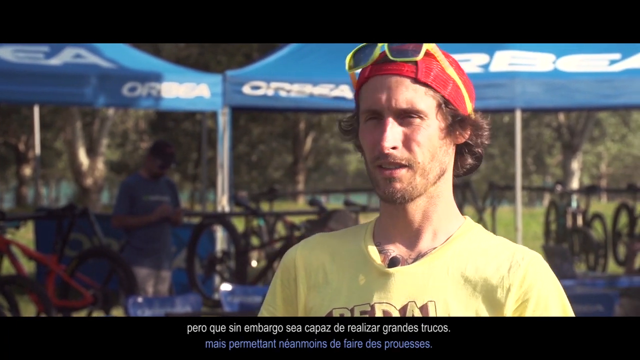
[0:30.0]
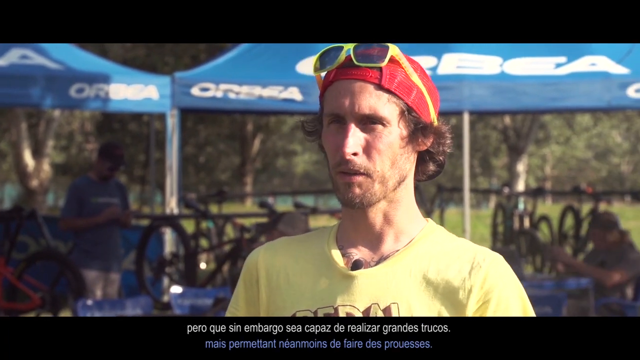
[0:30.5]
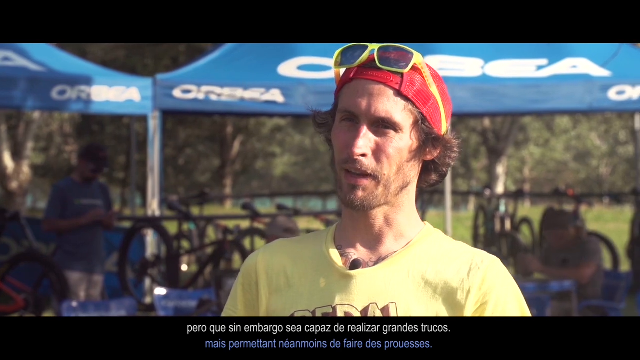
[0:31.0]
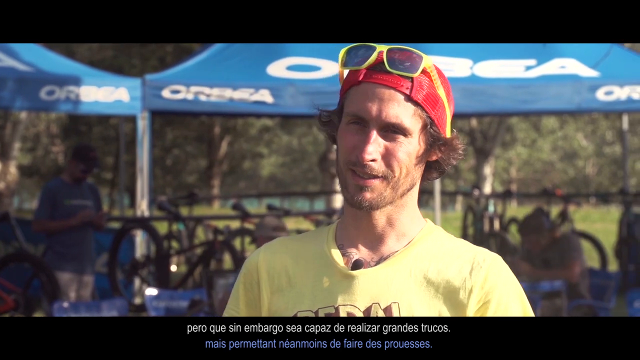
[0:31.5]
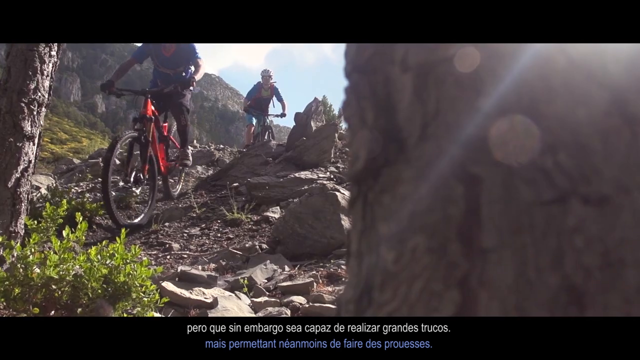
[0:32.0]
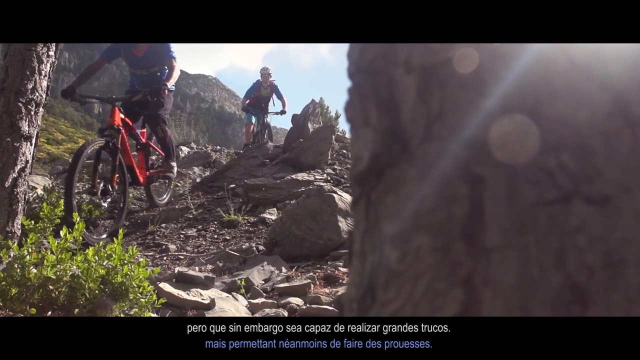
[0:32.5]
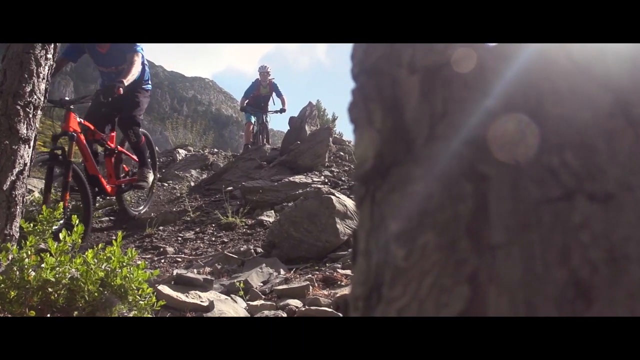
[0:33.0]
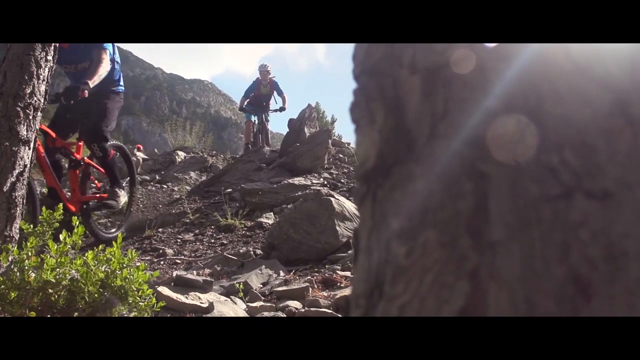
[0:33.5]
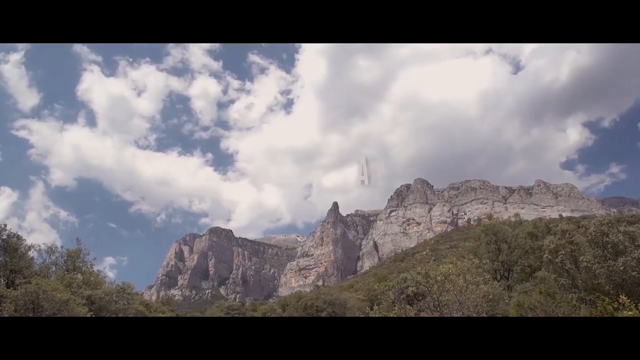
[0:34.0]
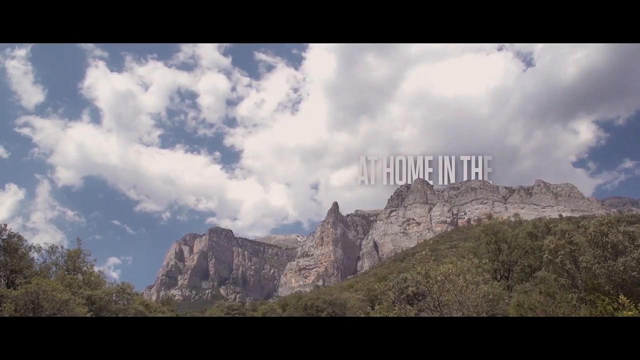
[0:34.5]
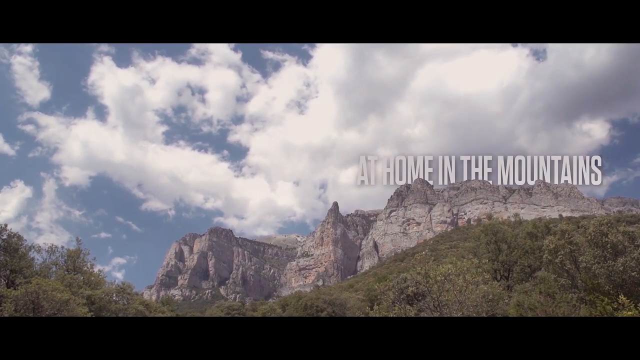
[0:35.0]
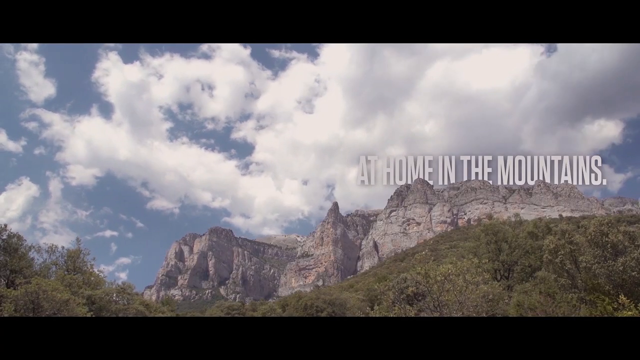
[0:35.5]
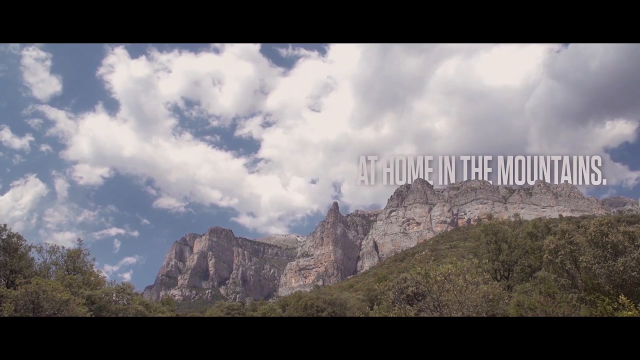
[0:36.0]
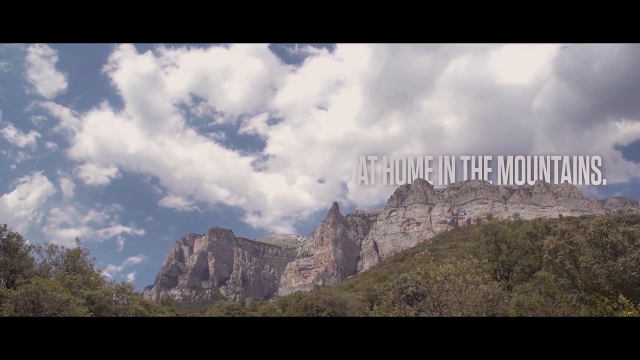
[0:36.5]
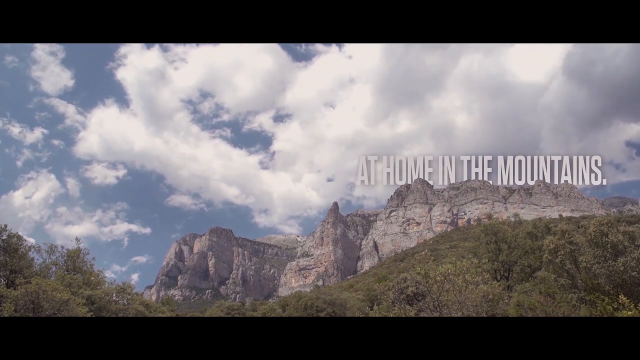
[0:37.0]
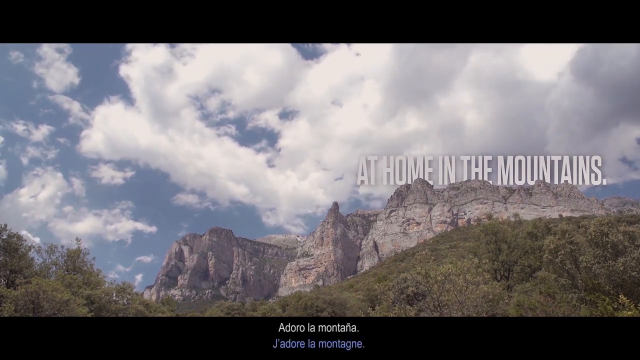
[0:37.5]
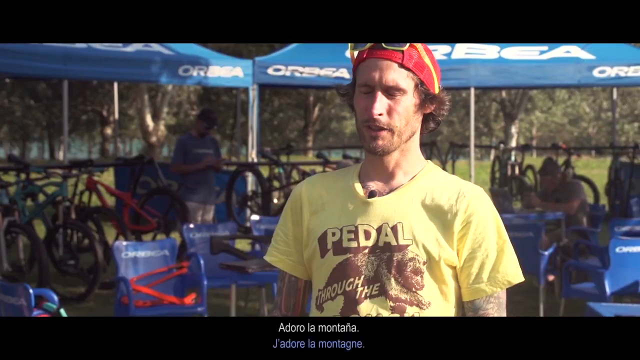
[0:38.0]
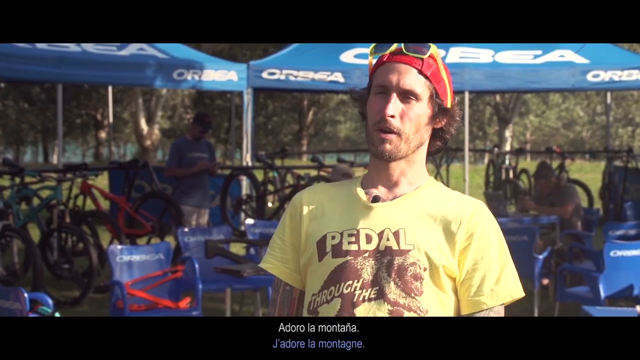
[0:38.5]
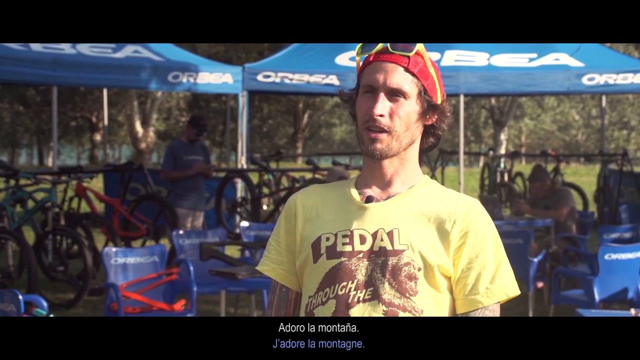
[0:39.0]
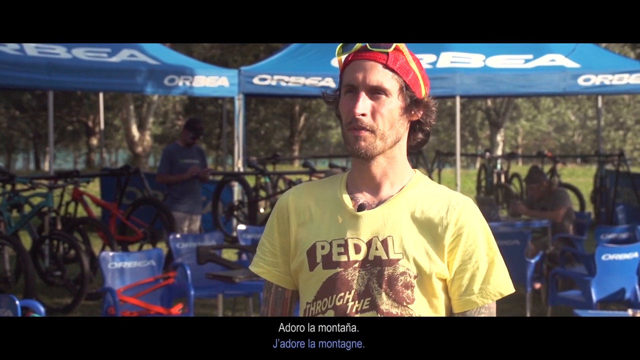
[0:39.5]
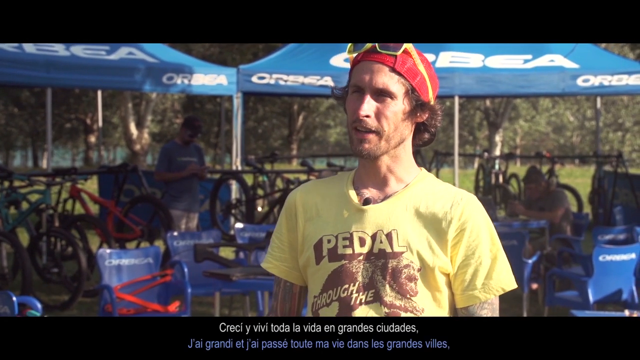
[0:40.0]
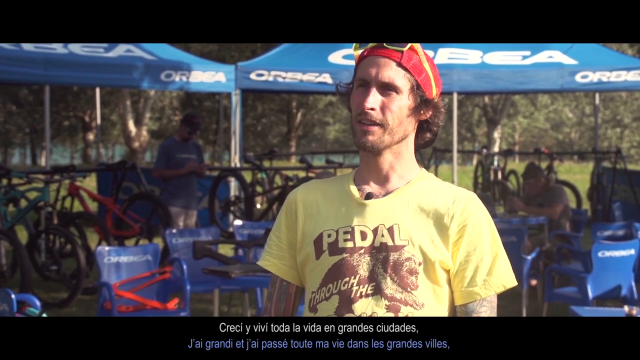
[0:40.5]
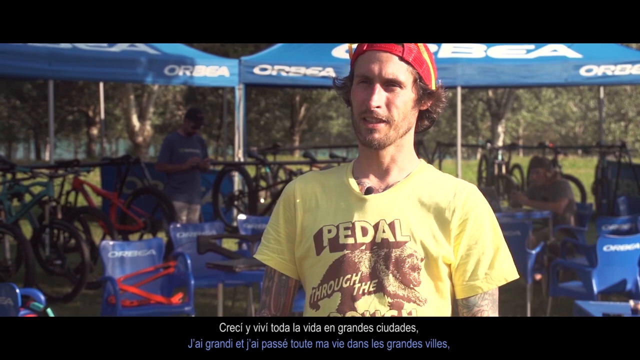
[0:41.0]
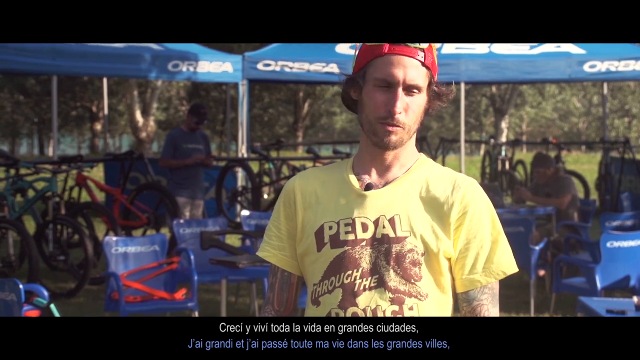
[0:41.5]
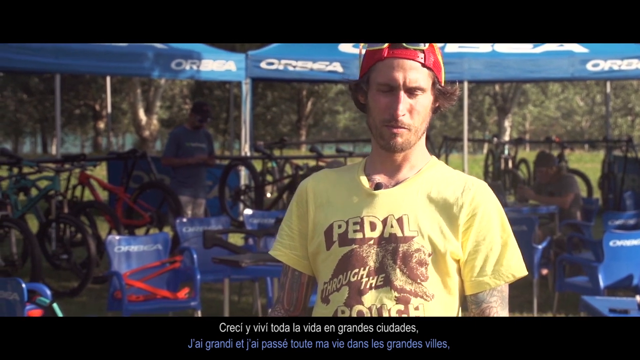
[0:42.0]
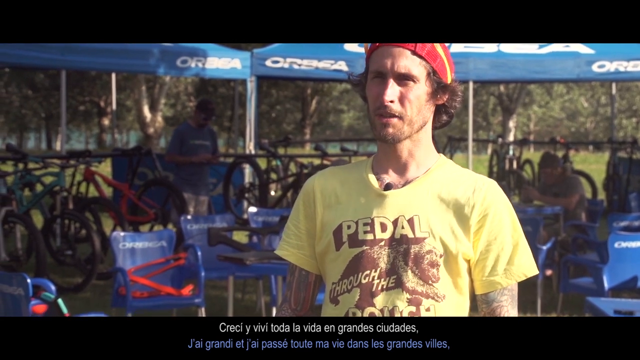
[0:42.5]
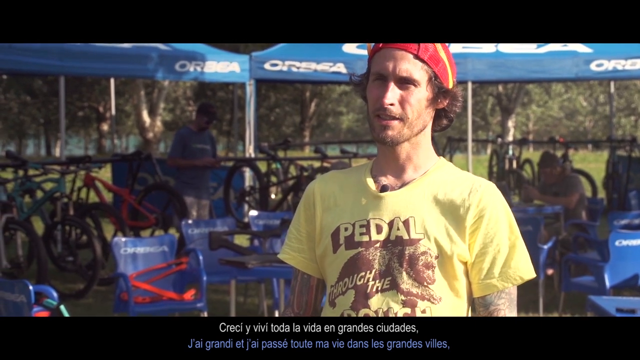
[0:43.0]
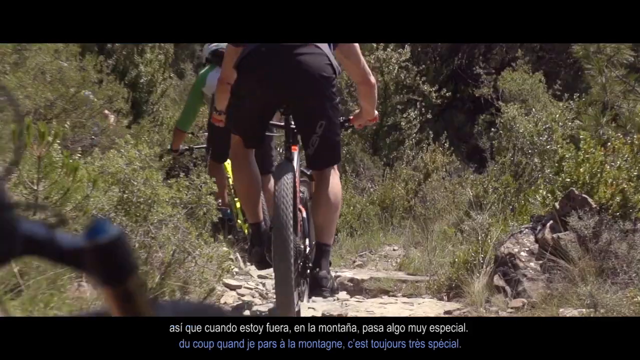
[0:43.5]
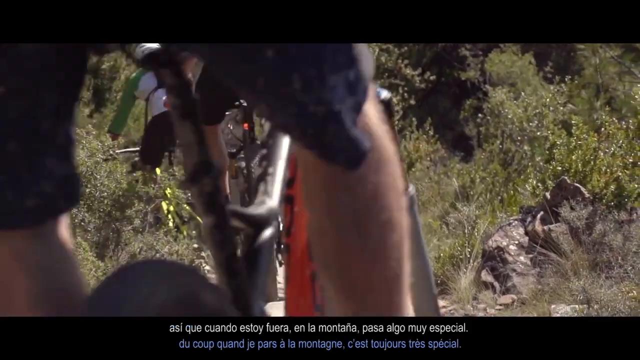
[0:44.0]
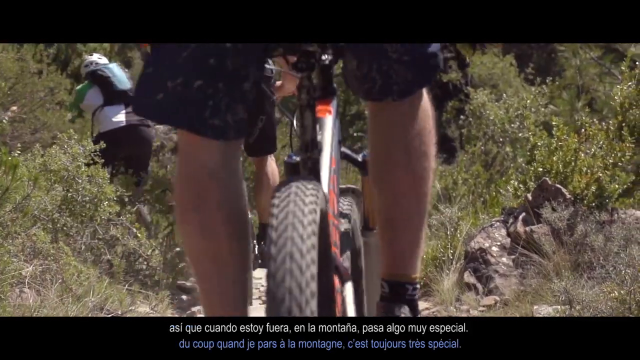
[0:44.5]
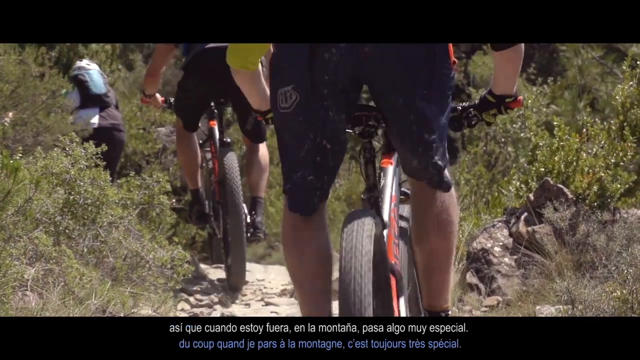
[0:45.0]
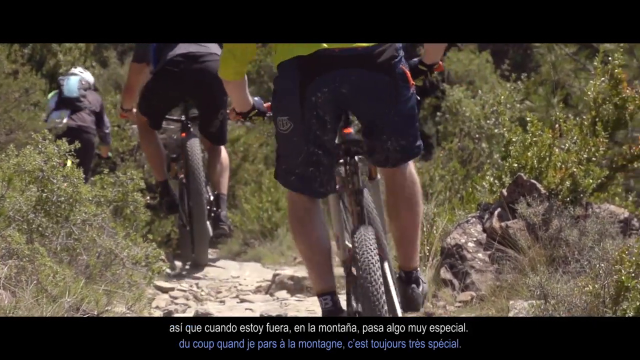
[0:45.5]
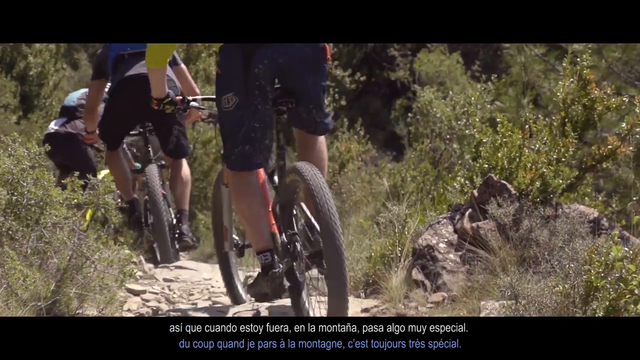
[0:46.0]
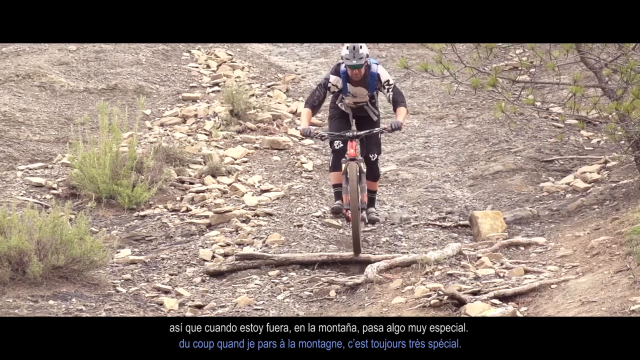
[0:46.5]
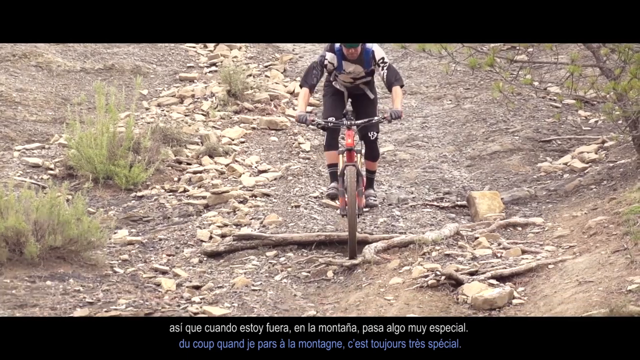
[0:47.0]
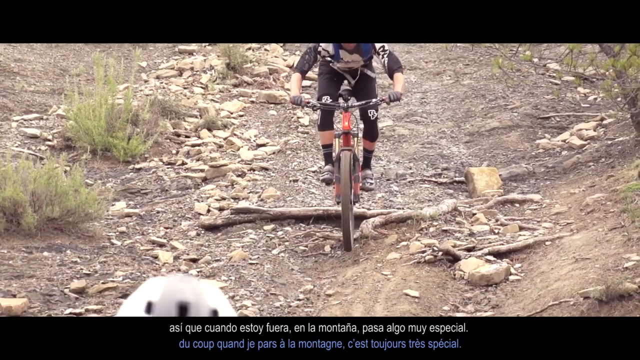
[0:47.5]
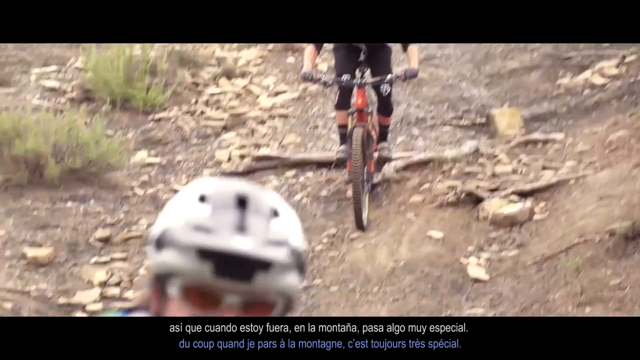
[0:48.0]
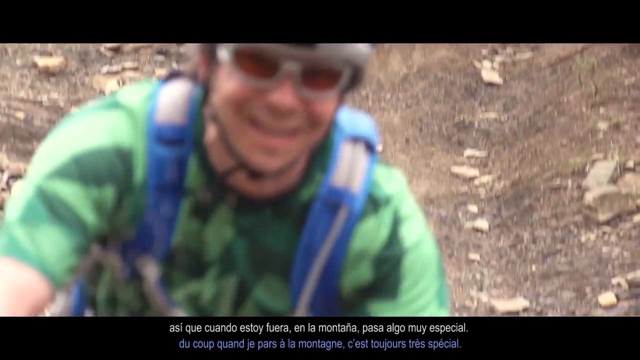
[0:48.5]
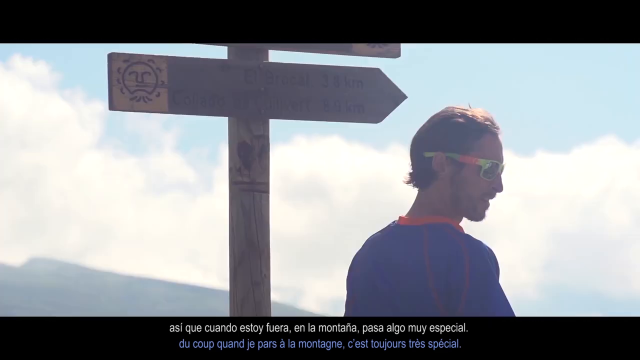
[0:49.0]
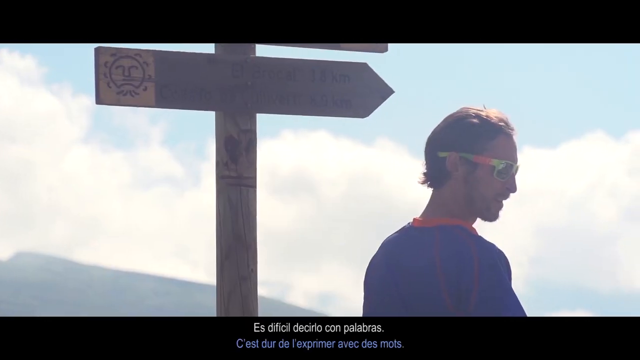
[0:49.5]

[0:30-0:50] The man in yellow talks a bit, then the video moves to more action shots of people on mountain bikes heading down a very rocky, loose trail. The lead rider has a red bicycle, and sun is shining down. A distant shot of a ridgeline and mountains follows, with the text "at home", sky and moving clouds. Next is the man in the yellow shirt, with text beginning "pedal through the"; he wears a red hat and yellow glasses, continues talking, and many bicycles are in the background. The video returns to action shots of people riding on the trails, and then the riders come up to a sign showing different destinations. In some sections there are sentences in a foreign language at the bottom of the screen, possibly Spanish or French.